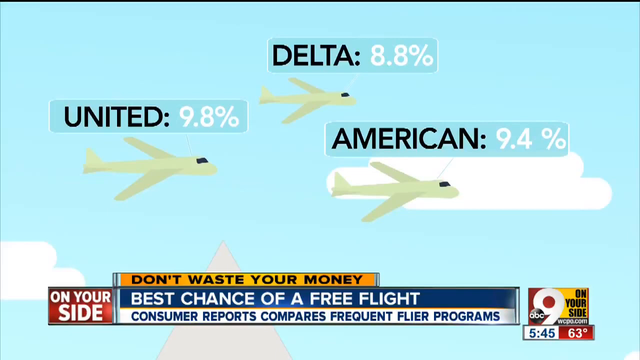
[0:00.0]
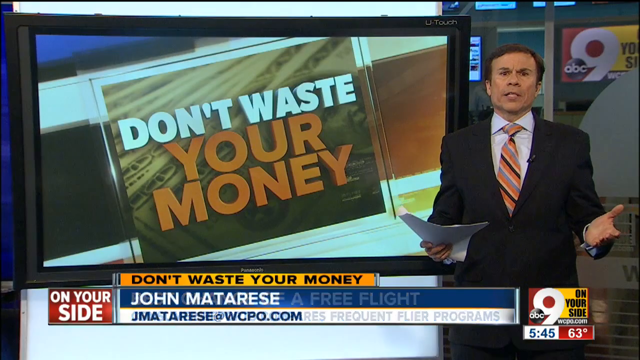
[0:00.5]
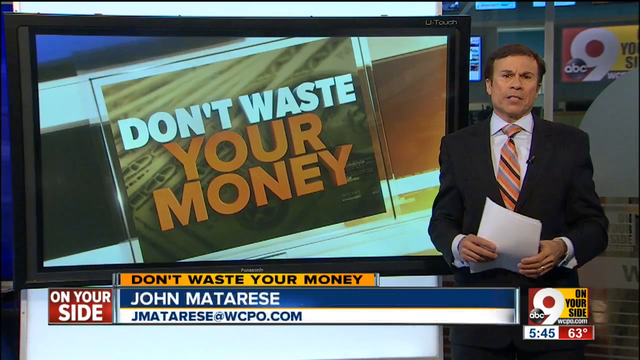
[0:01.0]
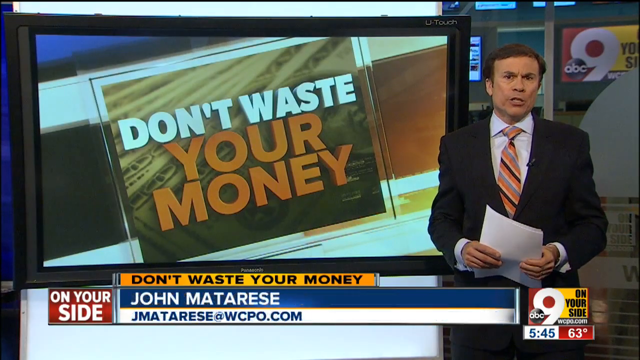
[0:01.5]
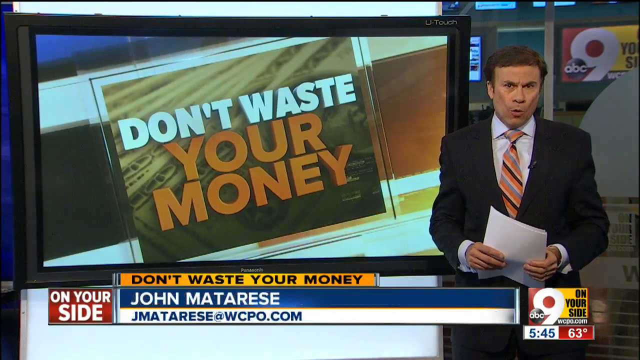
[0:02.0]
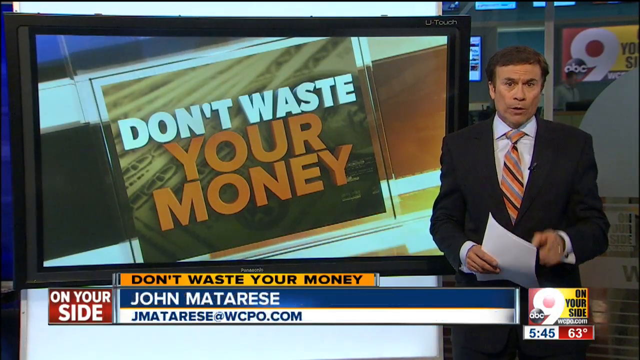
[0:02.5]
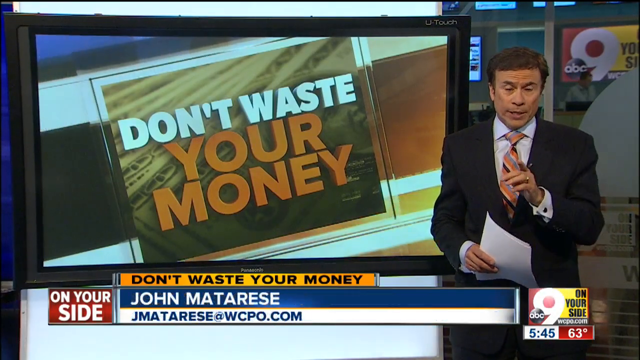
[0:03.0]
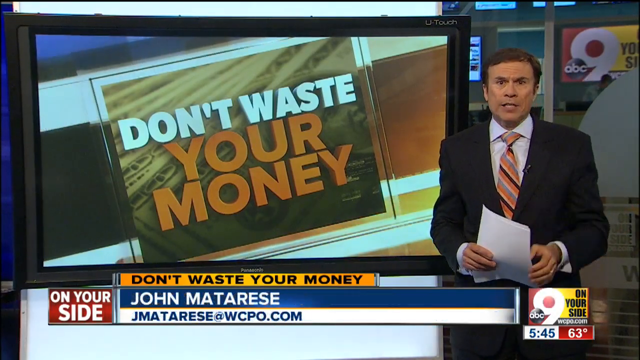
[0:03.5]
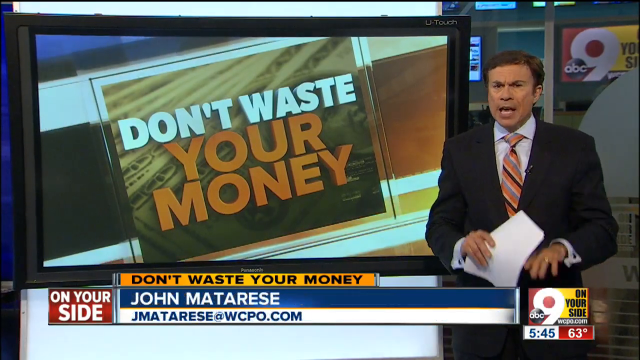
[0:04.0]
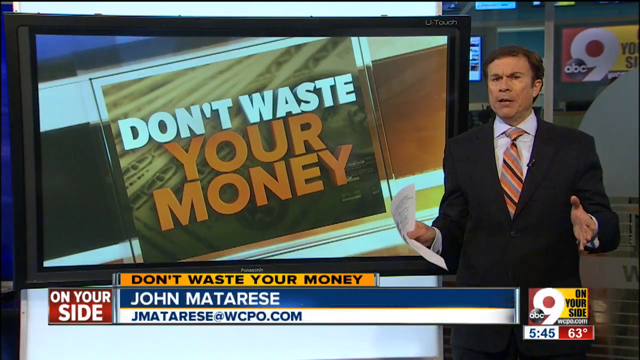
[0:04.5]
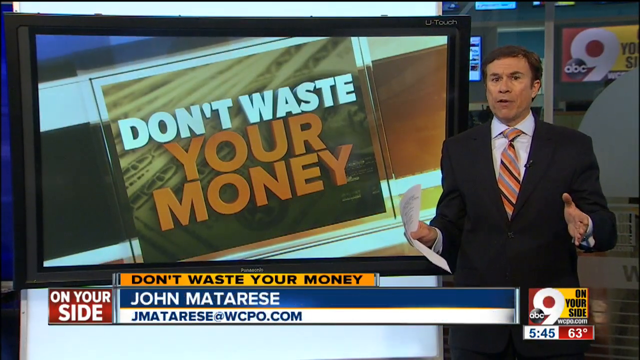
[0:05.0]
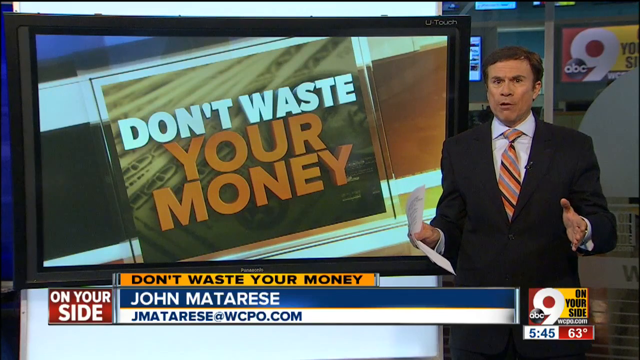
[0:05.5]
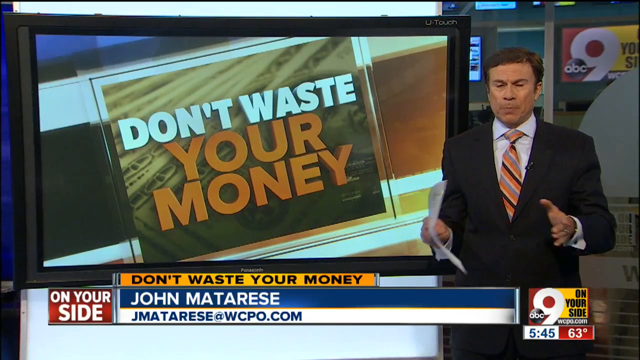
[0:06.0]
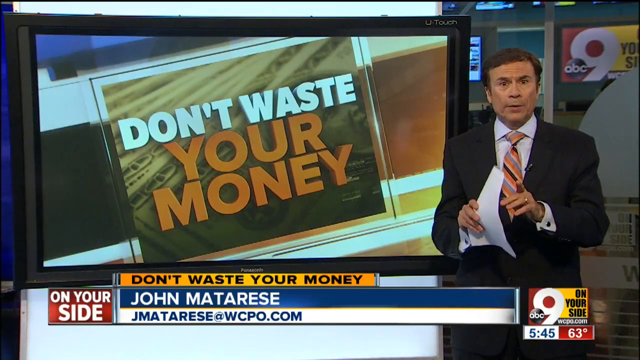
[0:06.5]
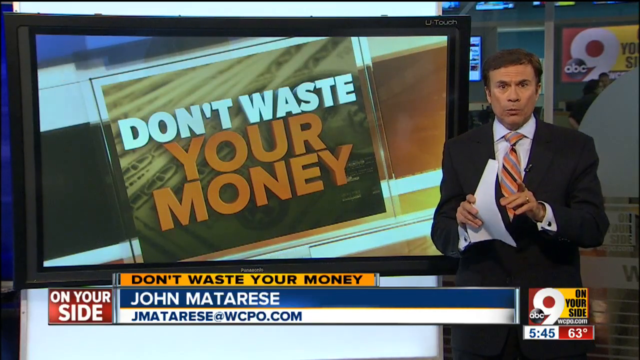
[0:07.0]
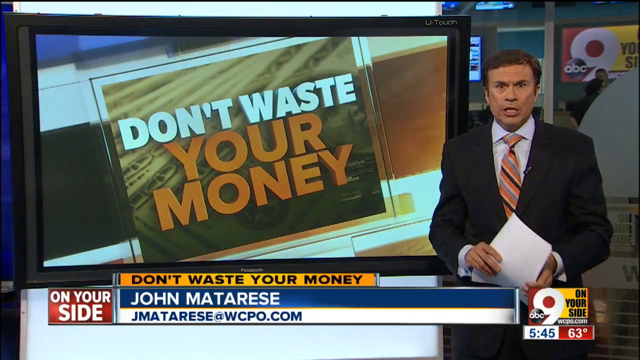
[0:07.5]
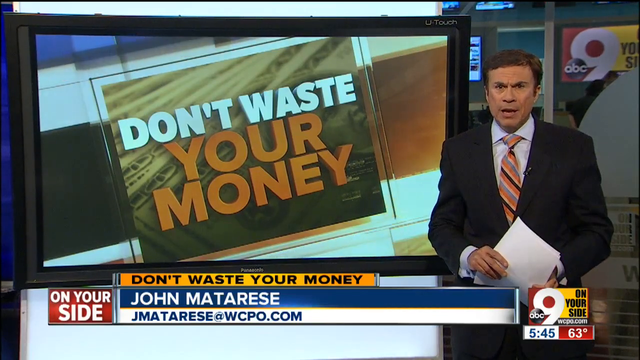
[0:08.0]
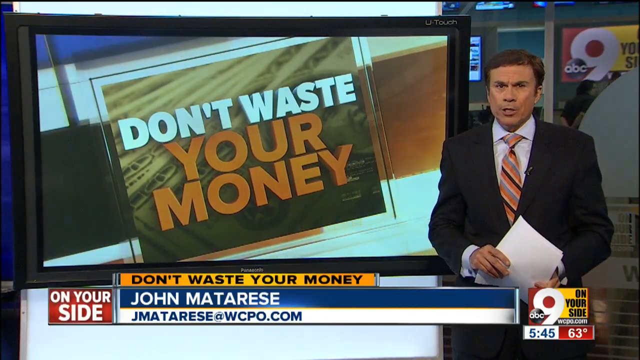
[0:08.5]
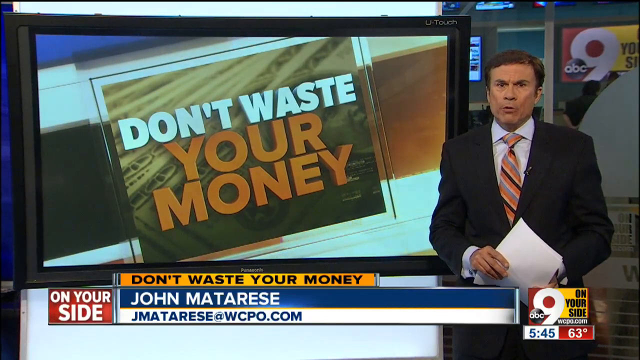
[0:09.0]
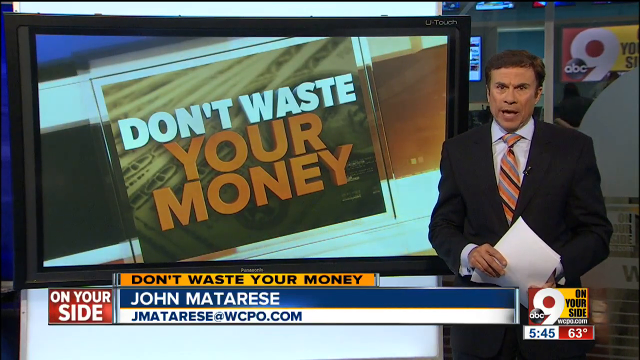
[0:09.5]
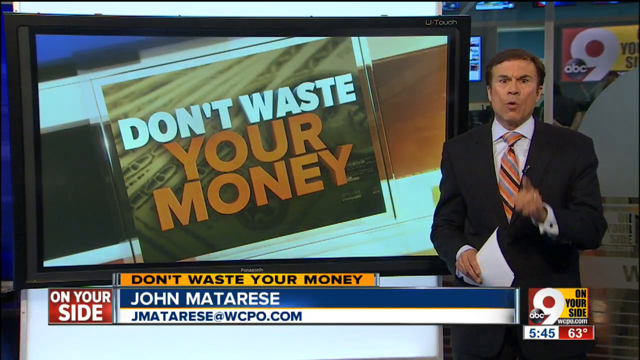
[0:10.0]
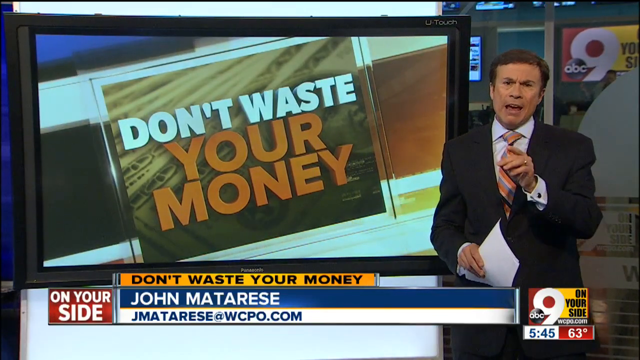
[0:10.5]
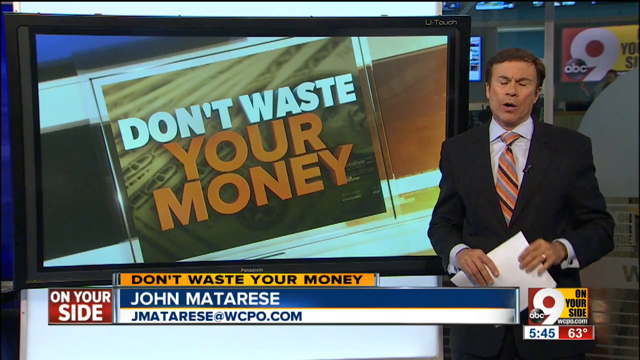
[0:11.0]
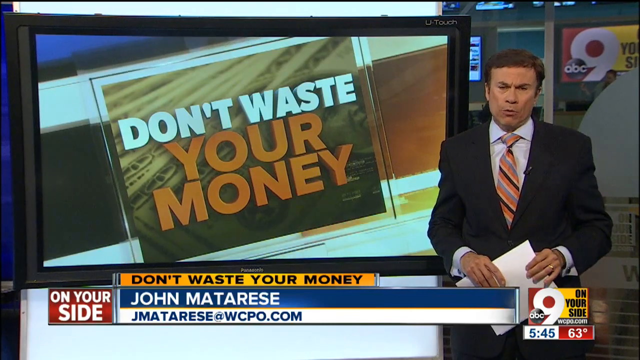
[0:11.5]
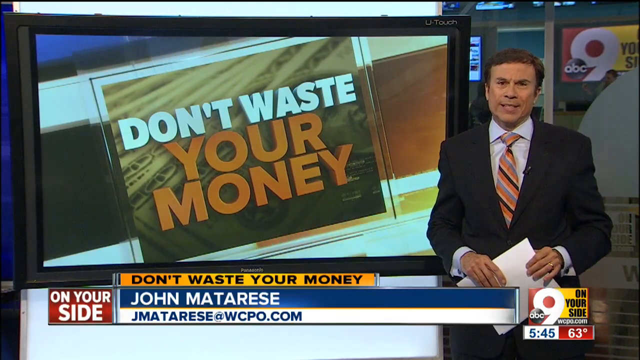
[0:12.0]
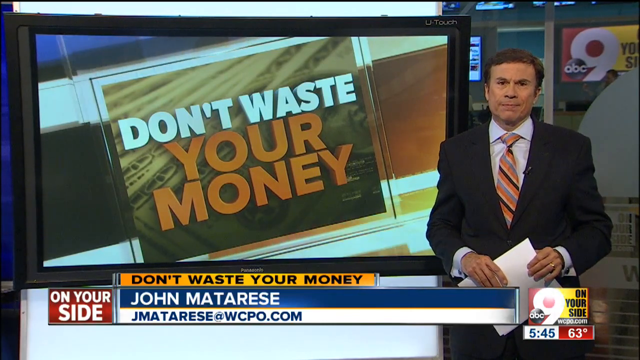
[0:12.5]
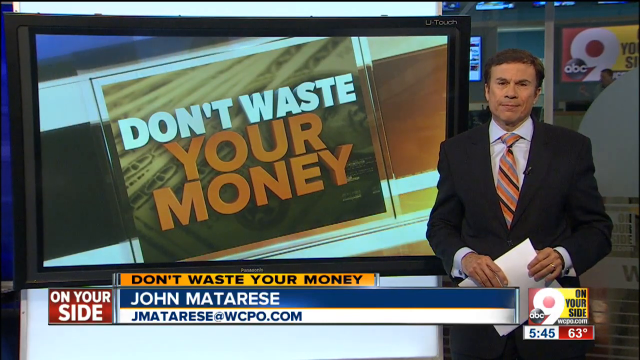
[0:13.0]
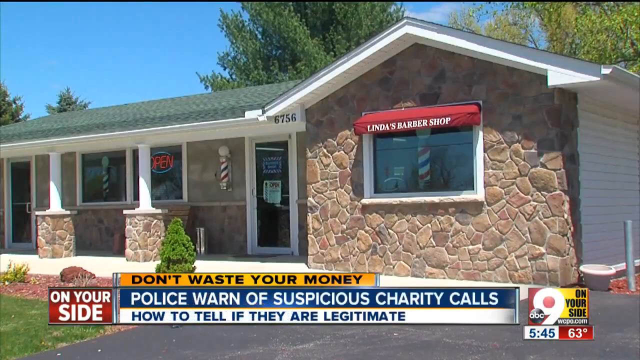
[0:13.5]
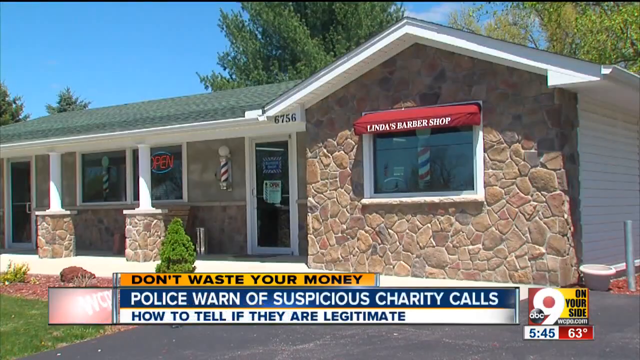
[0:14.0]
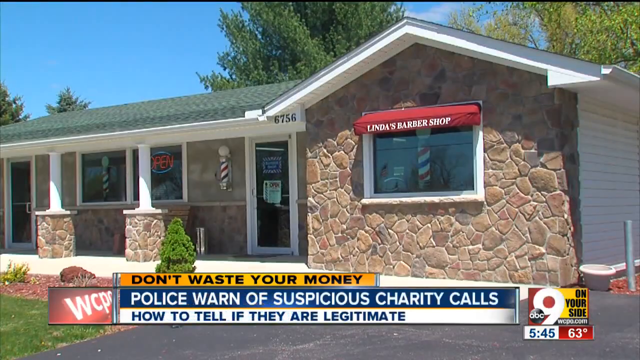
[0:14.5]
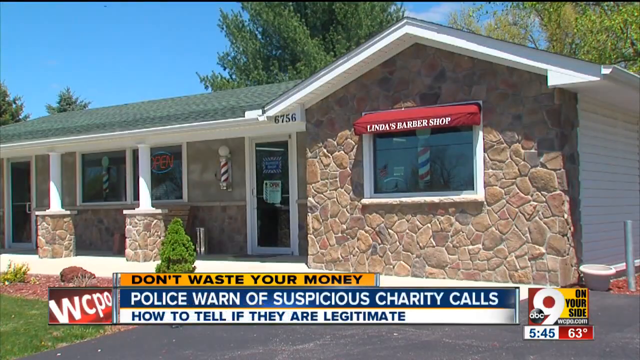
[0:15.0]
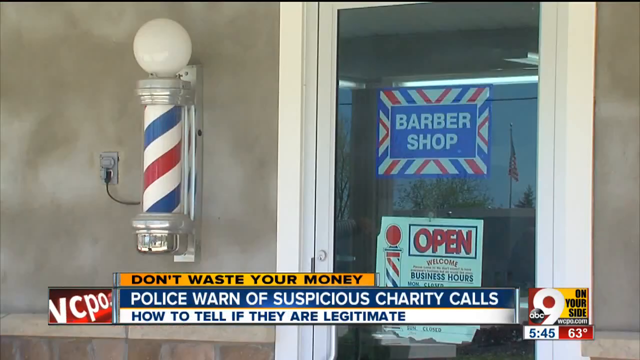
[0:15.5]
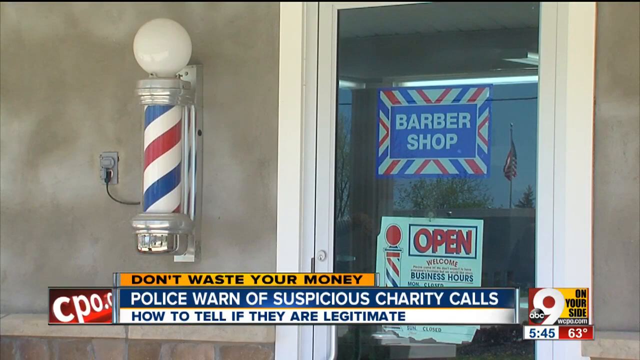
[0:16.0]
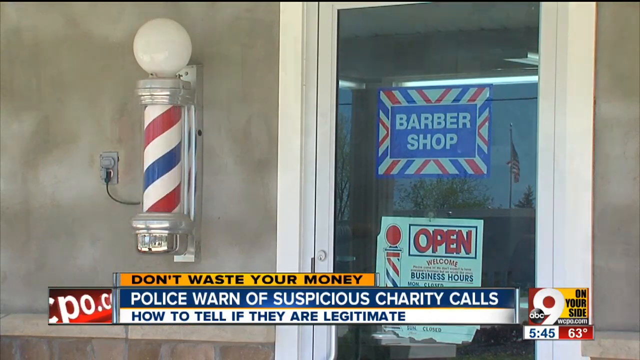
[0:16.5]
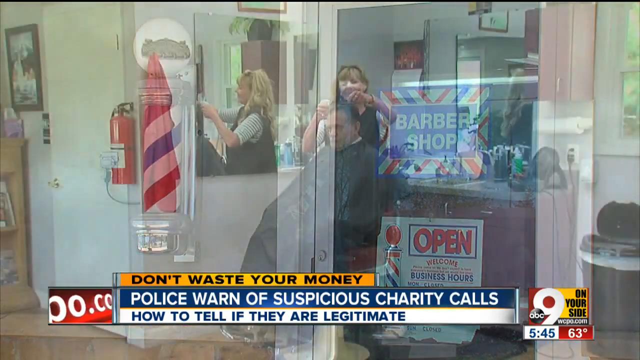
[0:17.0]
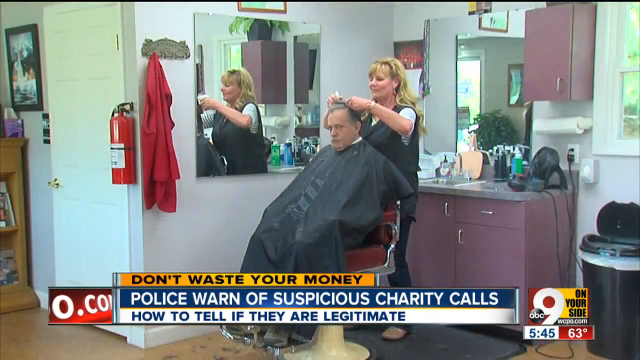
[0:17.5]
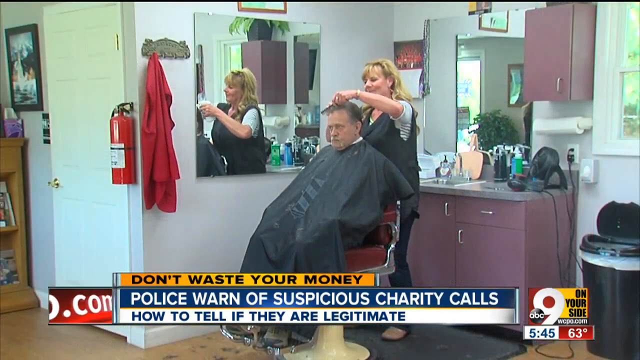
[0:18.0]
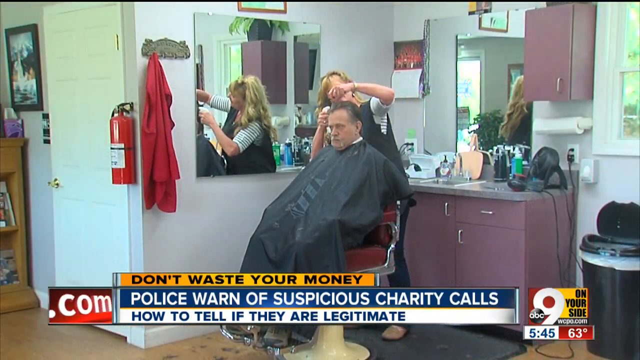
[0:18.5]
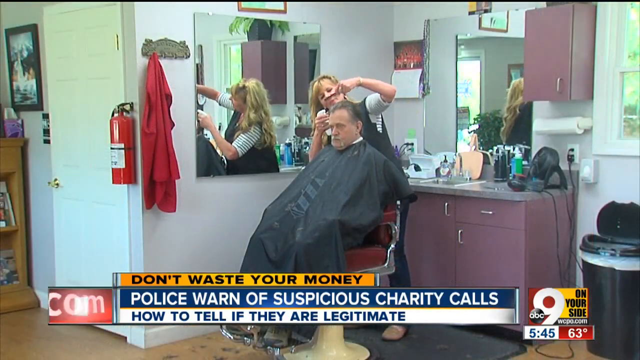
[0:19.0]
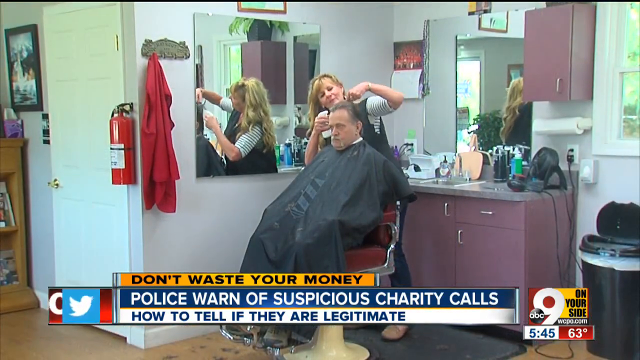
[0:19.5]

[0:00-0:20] A presenter named John Mataris wears a black blazer, a white shirt and a striped tie, along with a wedding ring. Behind him is a screen with "don't waste your money" written in block letters: "don't waste" is in white and "your money" is in orange. Next, a building appears that seems to be a house or a commercial building, and it seems to be a barbershop or salon. Inside are a lady and a man; the lady is standing and the man is sitting down, and the lady seems to be a hairdresser providing services to him.